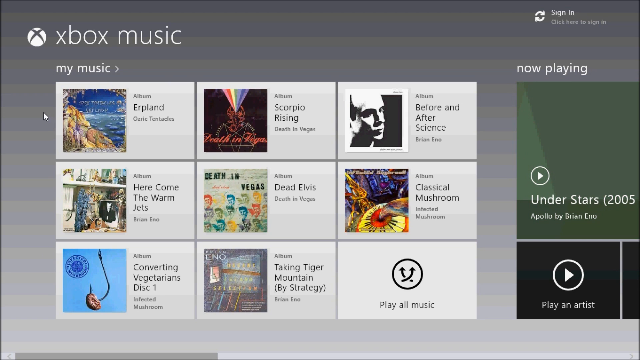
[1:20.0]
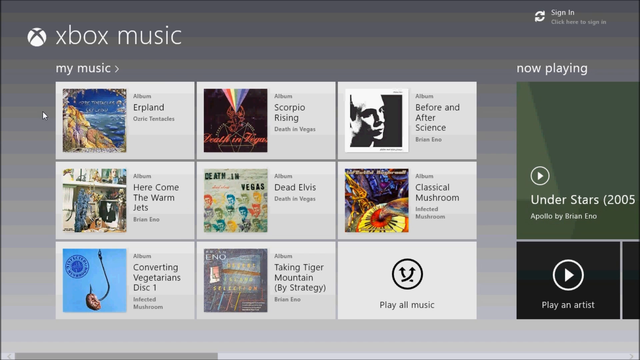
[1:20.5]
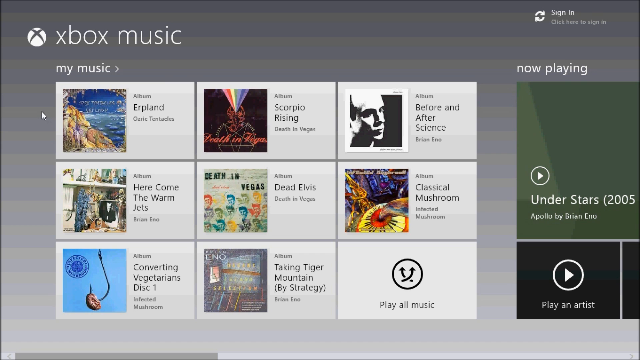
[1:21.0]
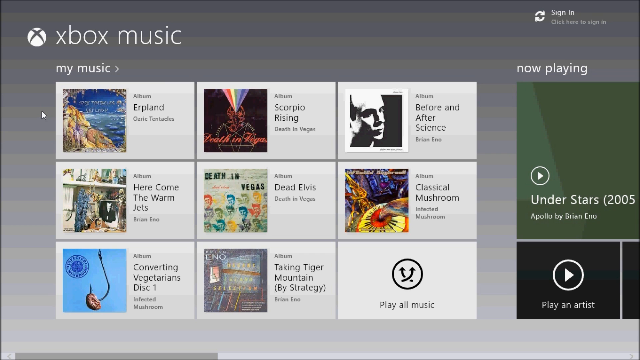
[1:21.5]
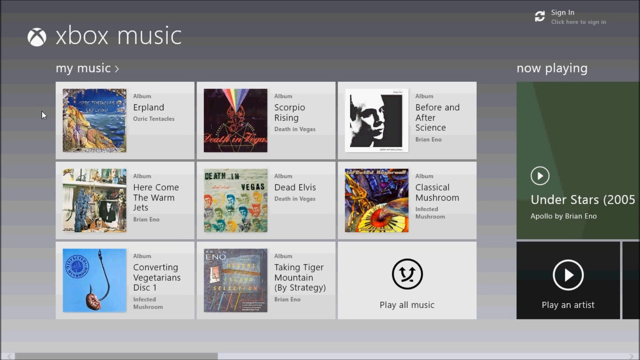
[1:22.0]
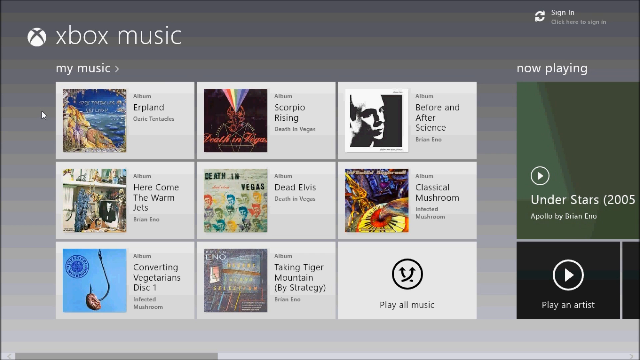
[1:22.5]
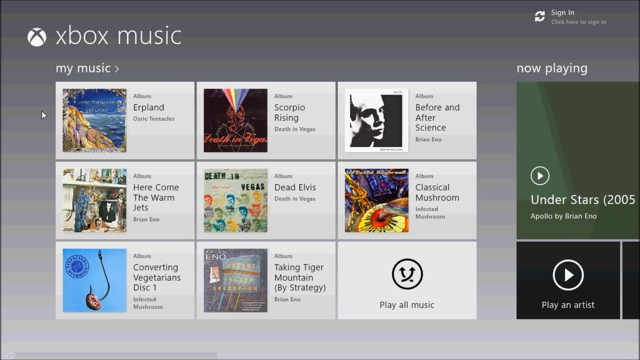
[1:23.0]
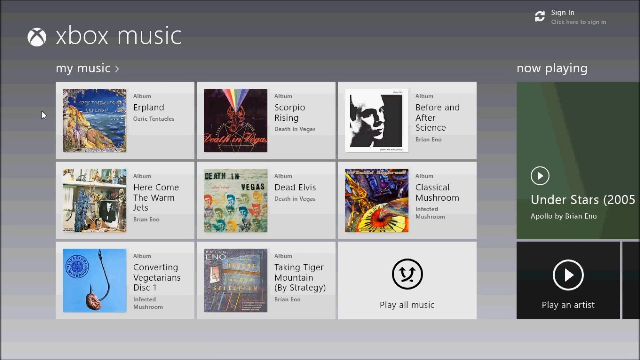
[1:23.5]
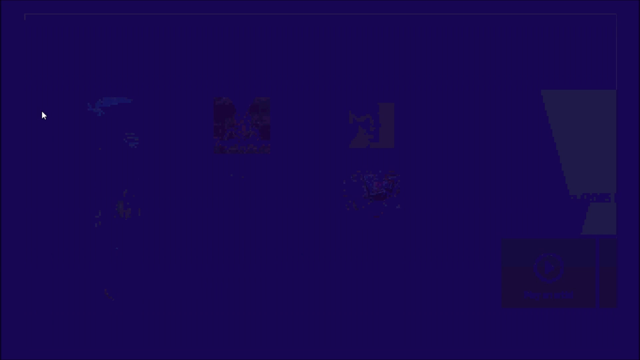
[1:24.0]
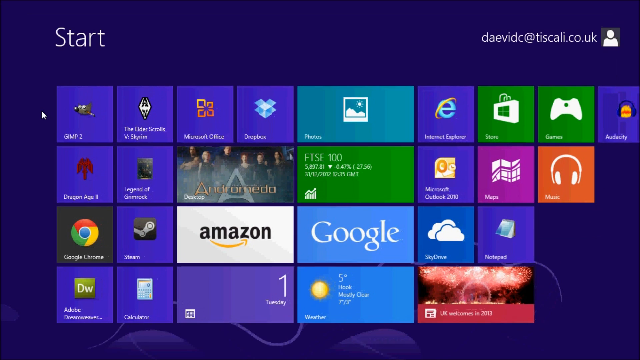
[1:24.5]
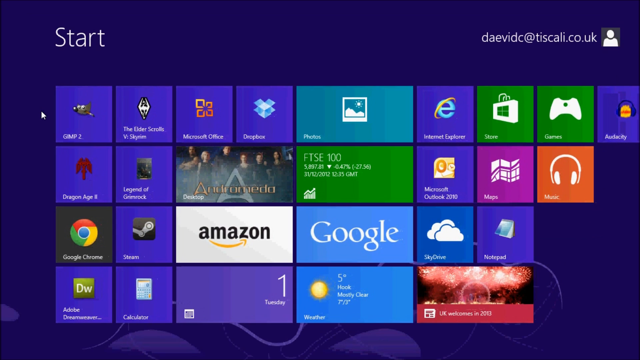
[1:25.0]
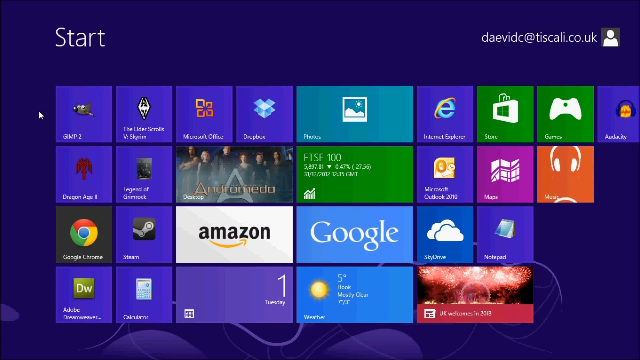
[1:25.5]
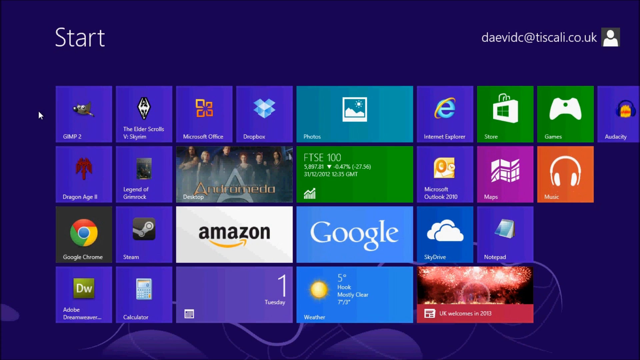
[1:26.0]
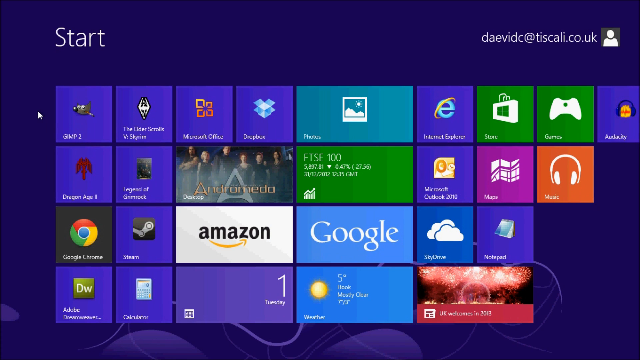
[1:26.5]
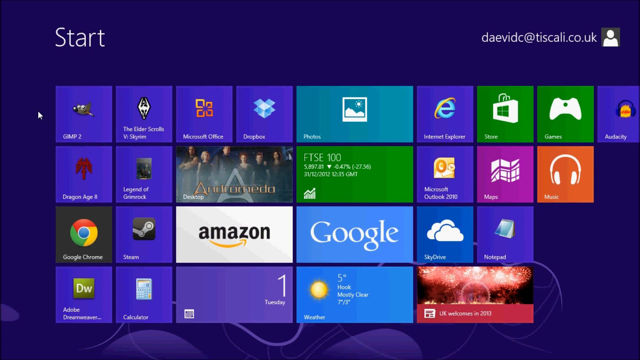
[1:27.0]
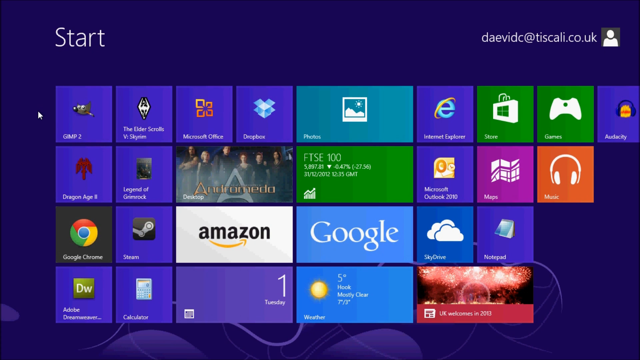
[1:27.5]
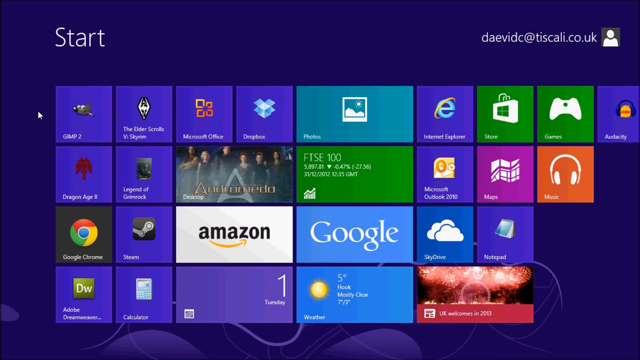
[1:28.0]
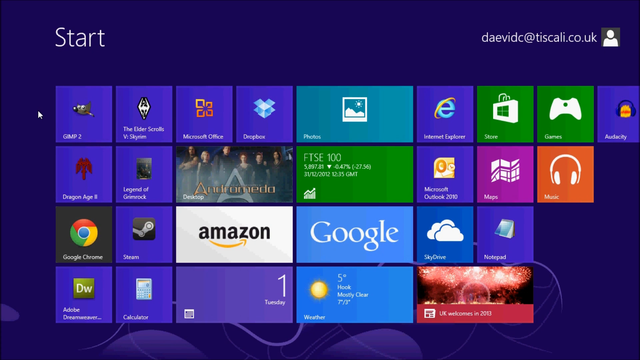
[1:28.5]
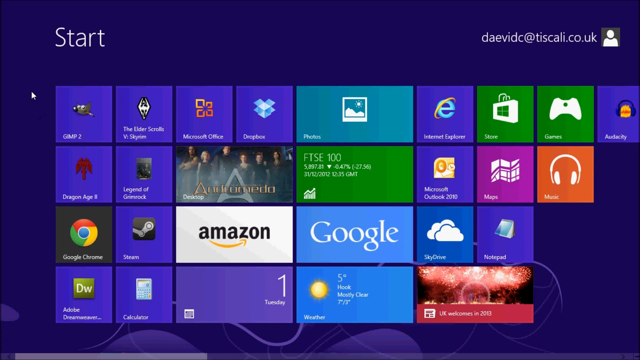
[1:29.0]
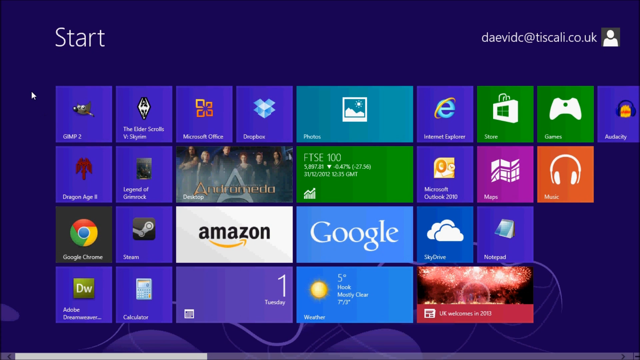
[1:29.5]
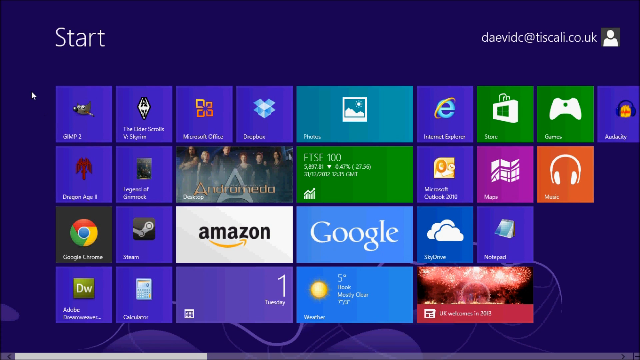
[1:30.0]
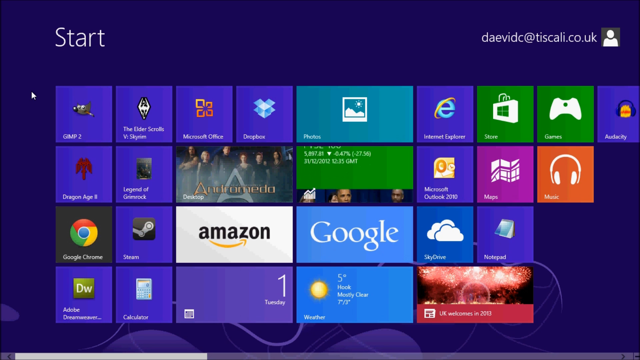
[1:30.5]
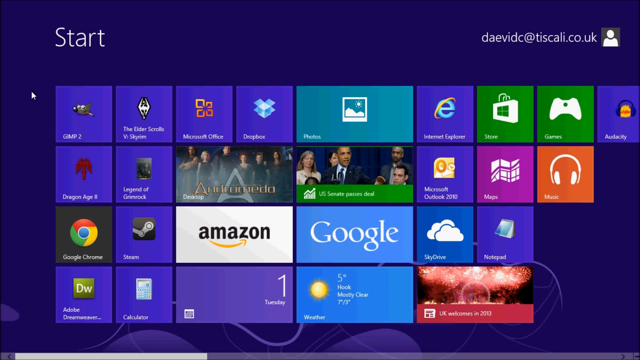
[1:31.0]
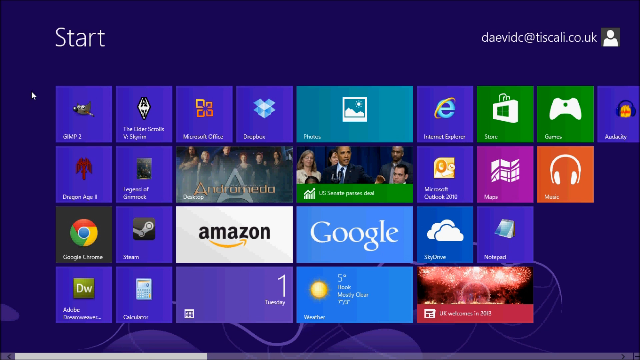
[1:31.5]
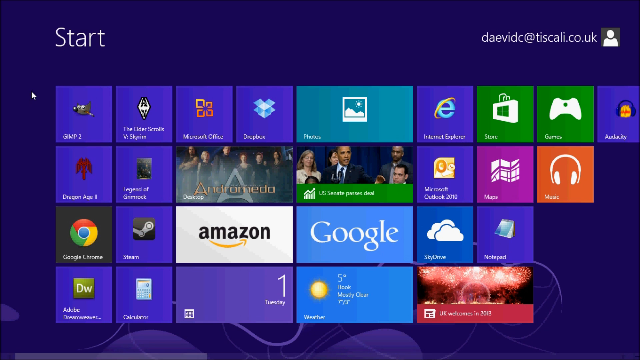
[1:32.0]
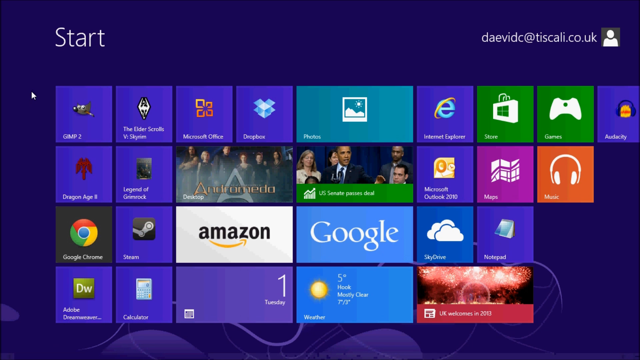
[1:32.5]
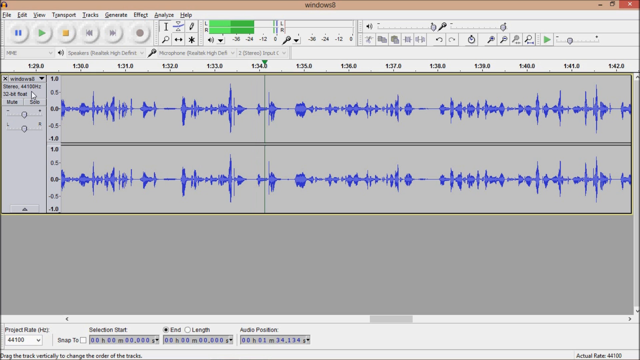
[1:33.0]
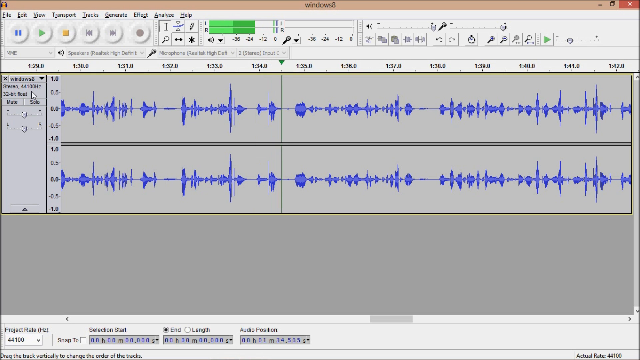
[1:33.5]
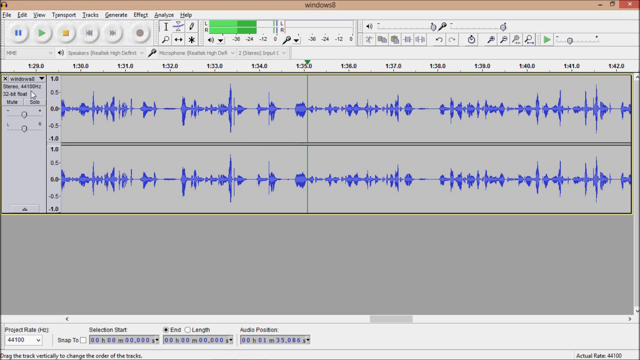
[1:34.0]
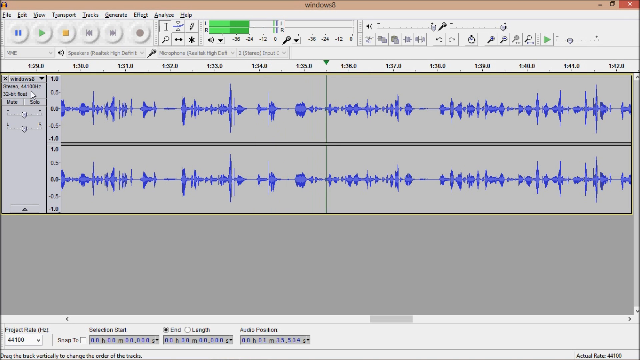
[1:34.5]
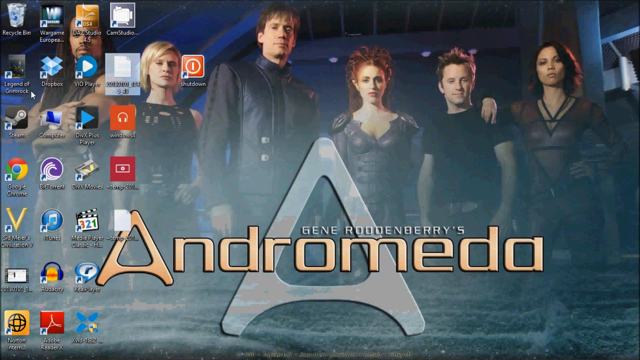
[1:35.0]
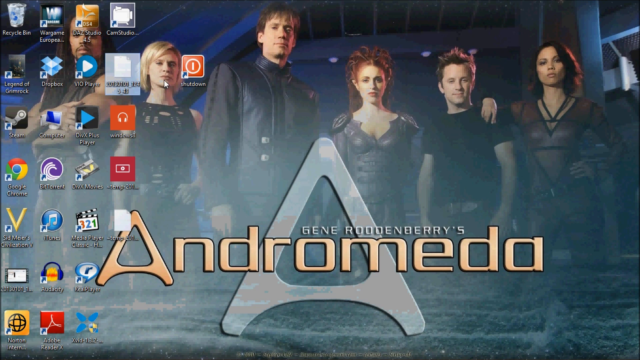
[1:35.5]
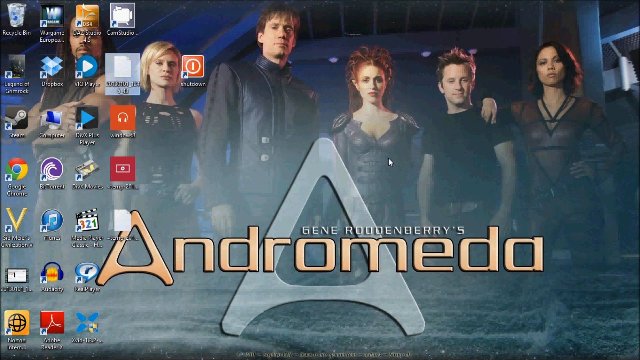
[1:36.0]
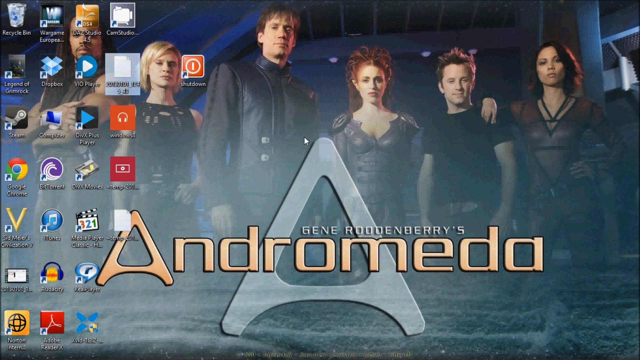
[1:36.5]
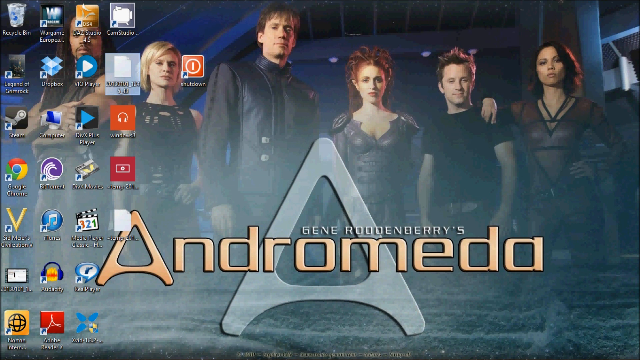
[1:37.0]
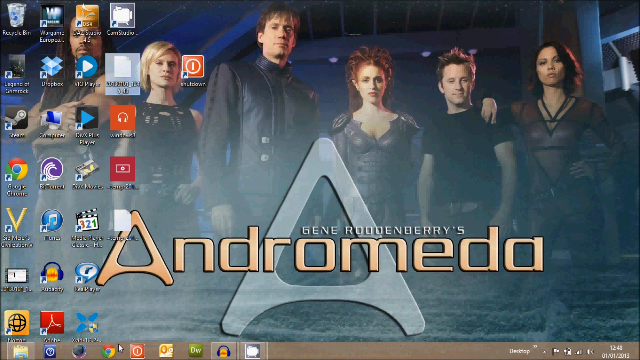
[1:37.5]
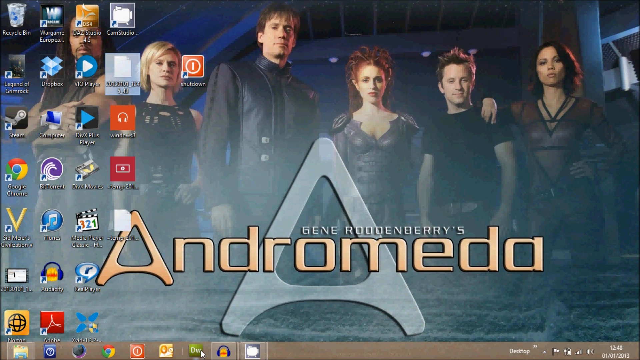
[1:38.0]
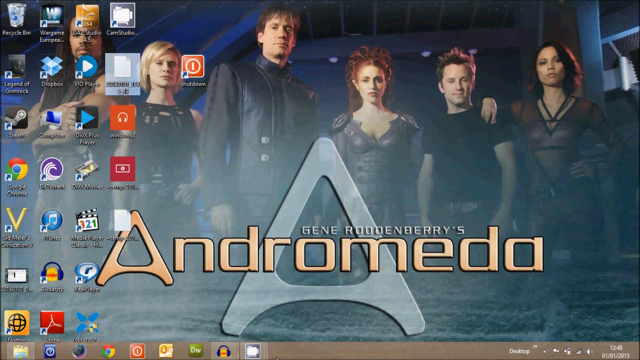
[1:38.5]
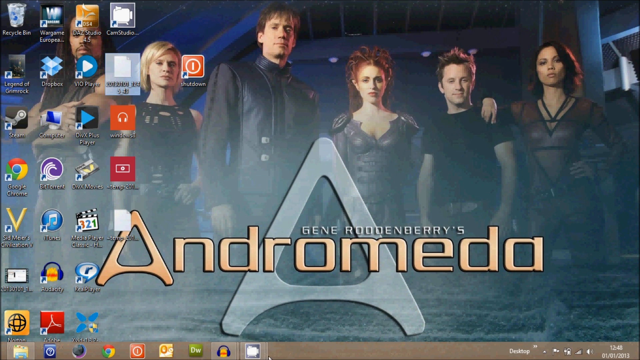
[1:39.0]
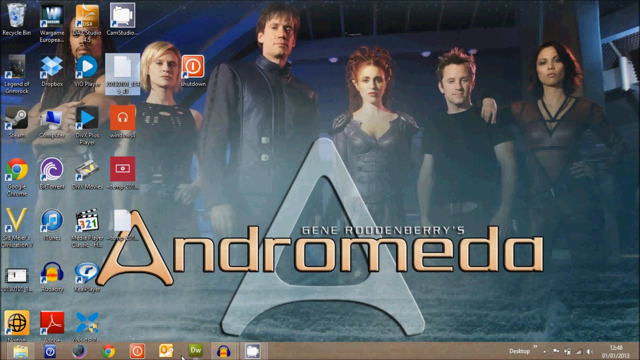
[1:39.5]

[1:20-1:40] The Xbox Music feed shows various albums, and the user goes back to the home screen with its various apps: a few games, a Microsoft Office app, a Dropbox app, a Photos app, an Internet Explorer app, a Store app, Games and Audacity. The next row shows "Dragon Age 2", something illegible, "Legend of", and the show Andromeda, and the stock market information is still displayed. The user clicks off and goes into what seems to be the Audacity app, which displays different audio tracks, apparently available to manipulate or change. The person then goes to the home screen, where Gene Roddenberry's Andromeda appears, and there are a bunch of quick starts on the left-hand side for launching apps quickly. They pan back to the music section and eventually end up back on the gaming platform's home screen, and they seem to click on Audacity once again.